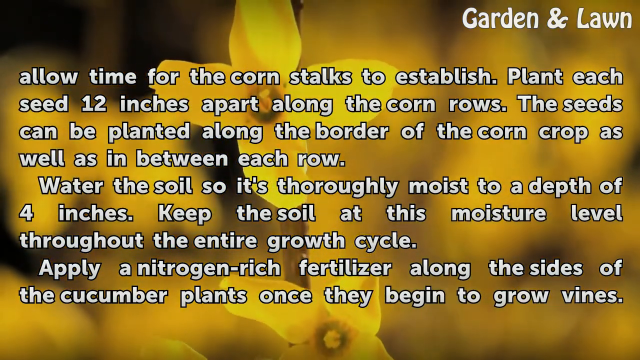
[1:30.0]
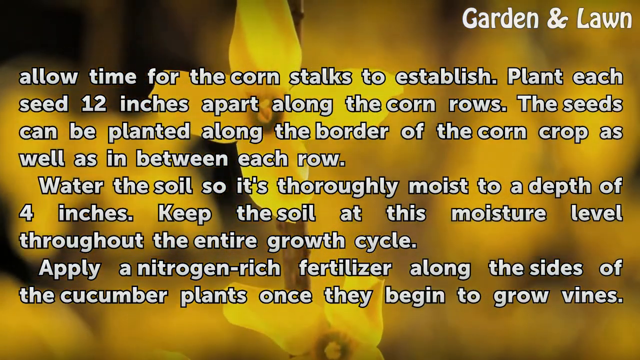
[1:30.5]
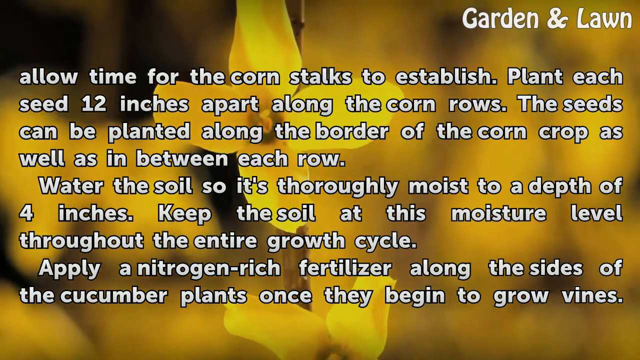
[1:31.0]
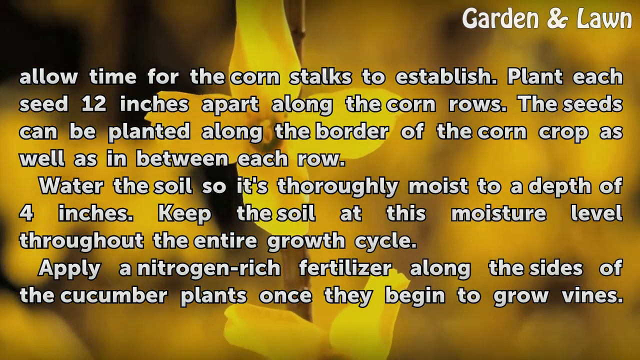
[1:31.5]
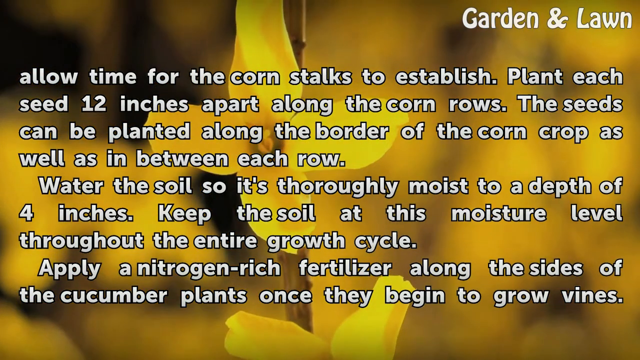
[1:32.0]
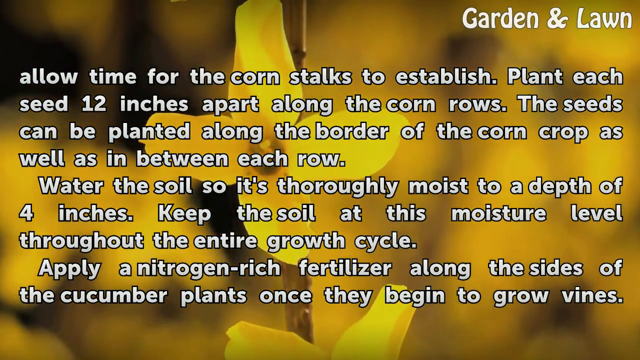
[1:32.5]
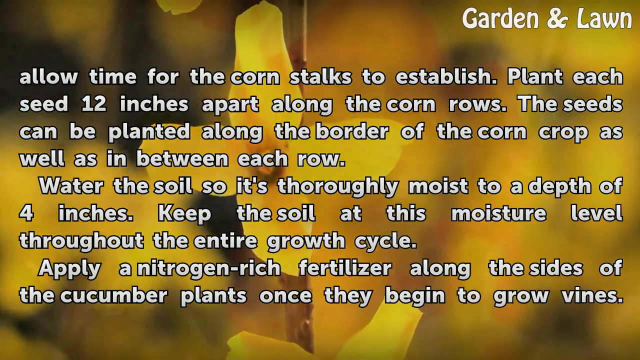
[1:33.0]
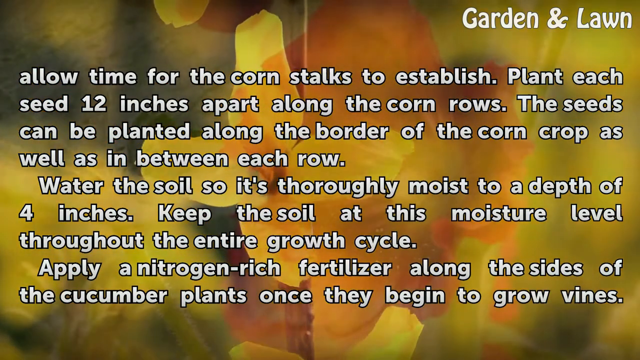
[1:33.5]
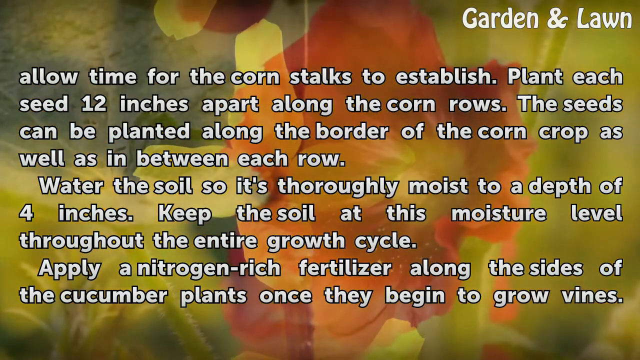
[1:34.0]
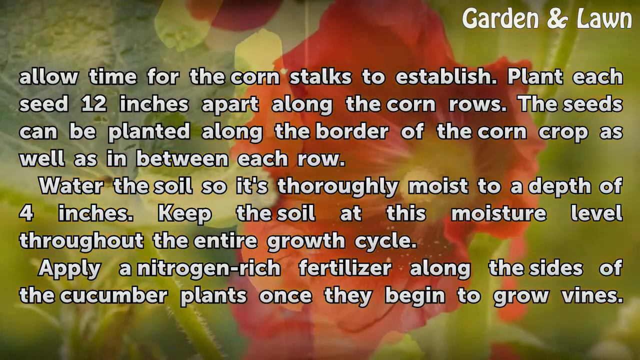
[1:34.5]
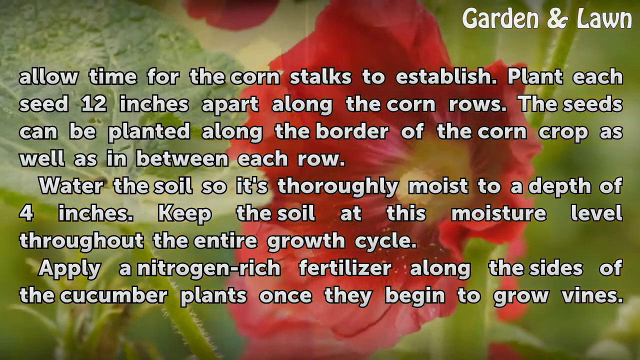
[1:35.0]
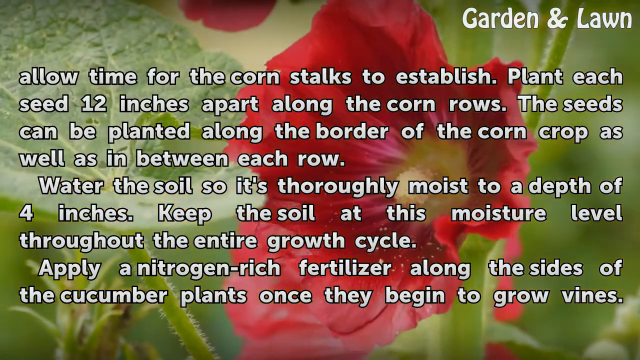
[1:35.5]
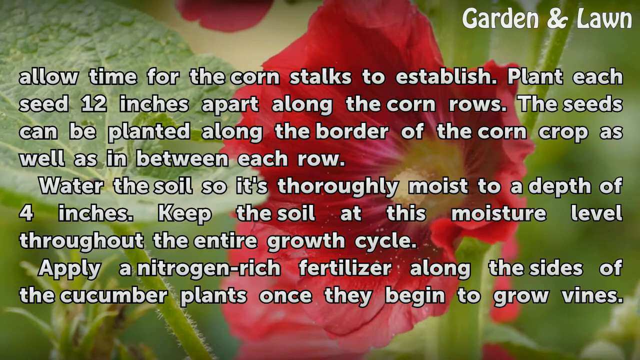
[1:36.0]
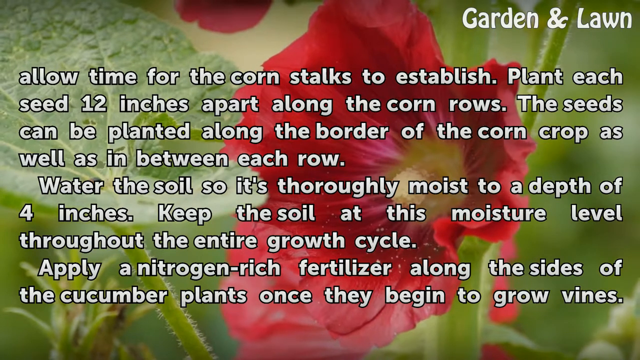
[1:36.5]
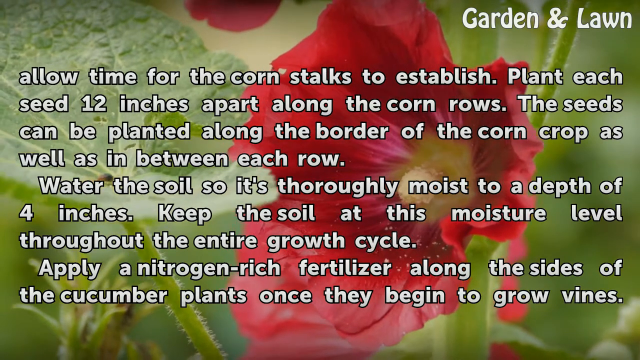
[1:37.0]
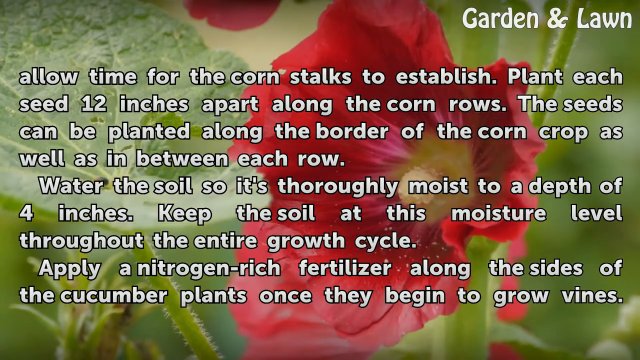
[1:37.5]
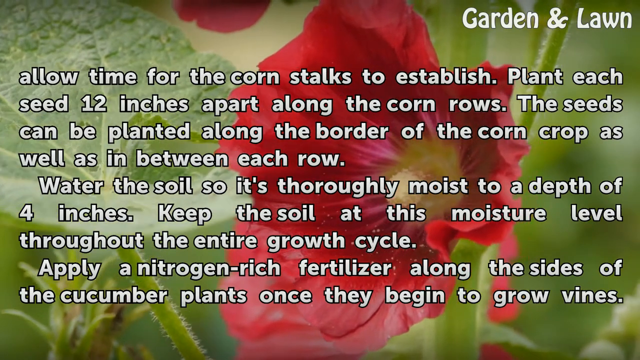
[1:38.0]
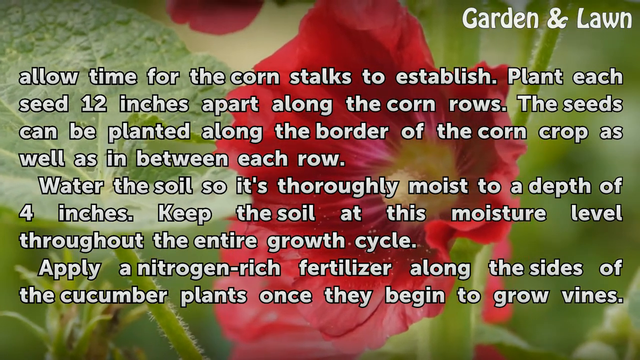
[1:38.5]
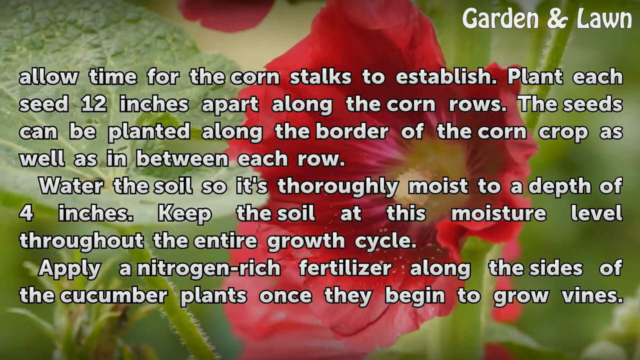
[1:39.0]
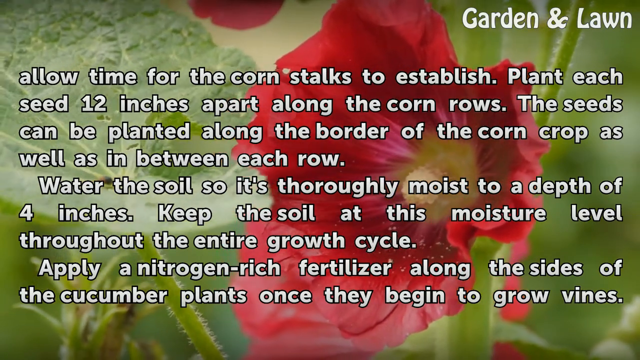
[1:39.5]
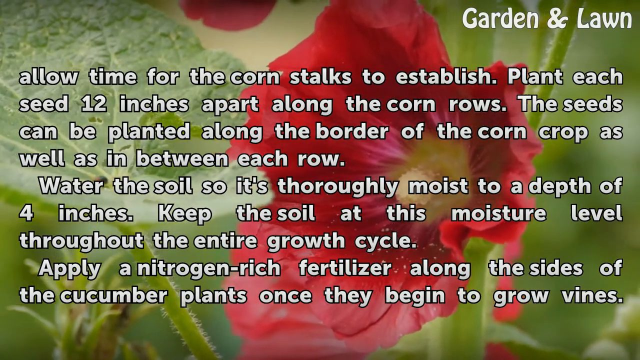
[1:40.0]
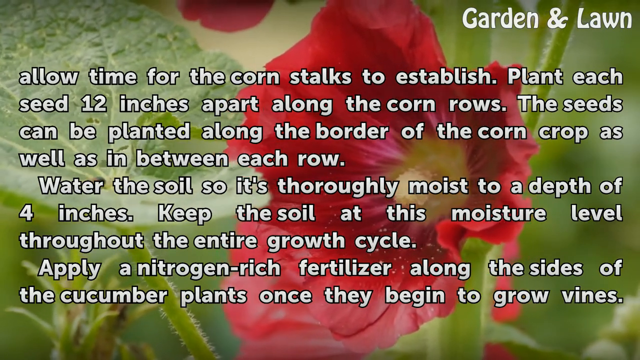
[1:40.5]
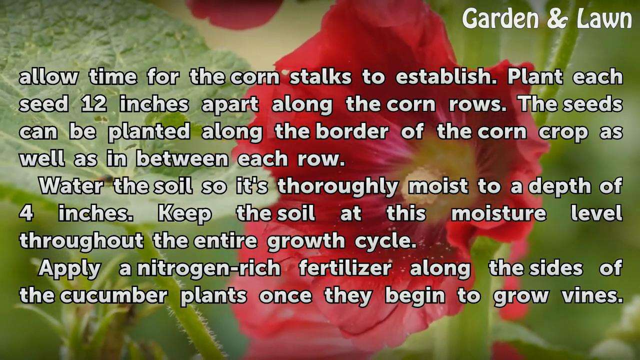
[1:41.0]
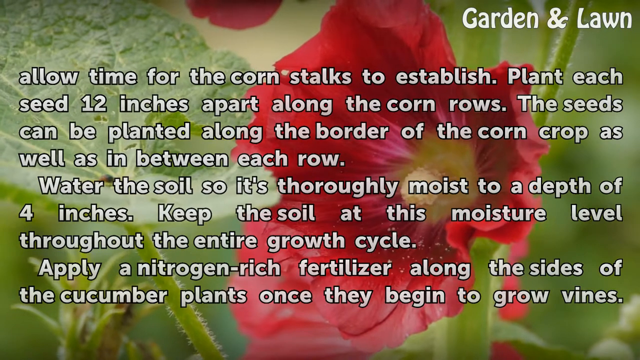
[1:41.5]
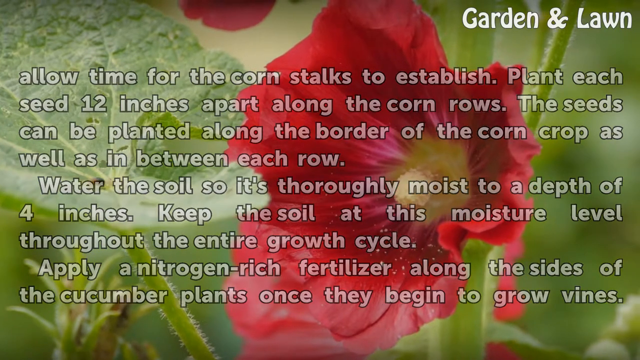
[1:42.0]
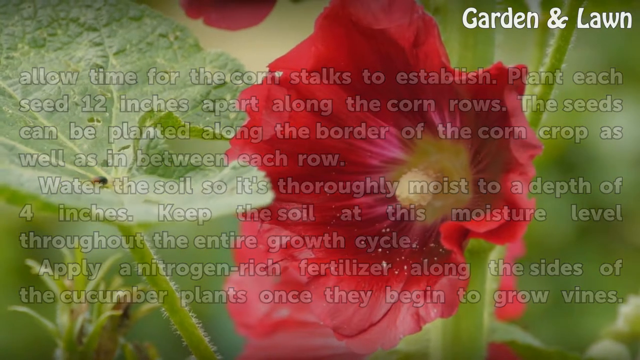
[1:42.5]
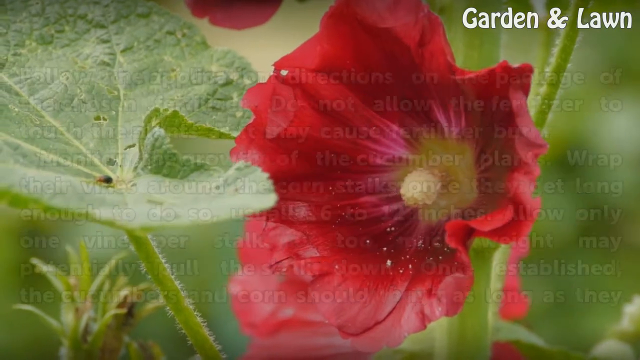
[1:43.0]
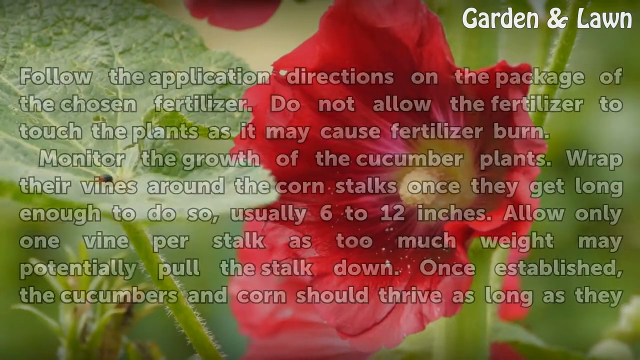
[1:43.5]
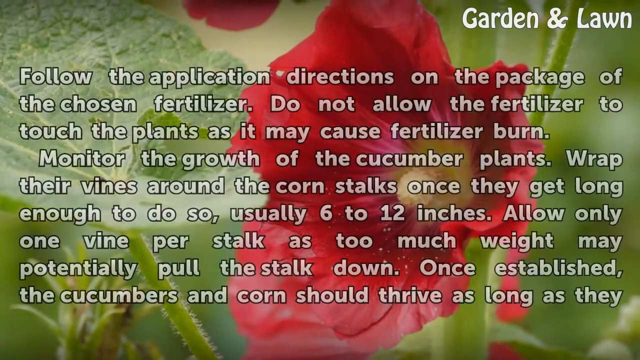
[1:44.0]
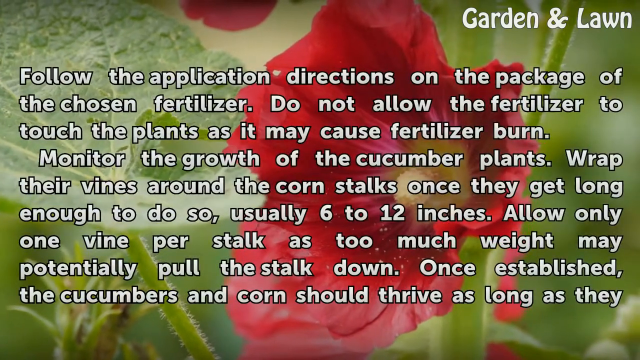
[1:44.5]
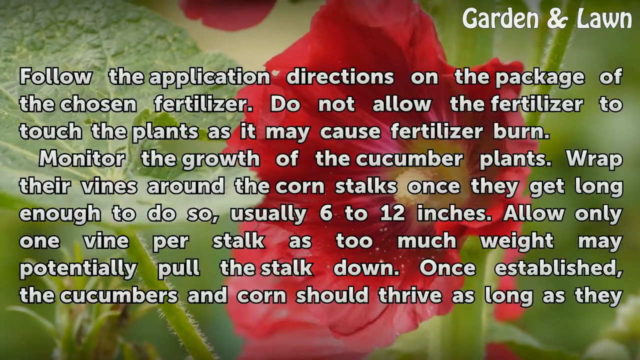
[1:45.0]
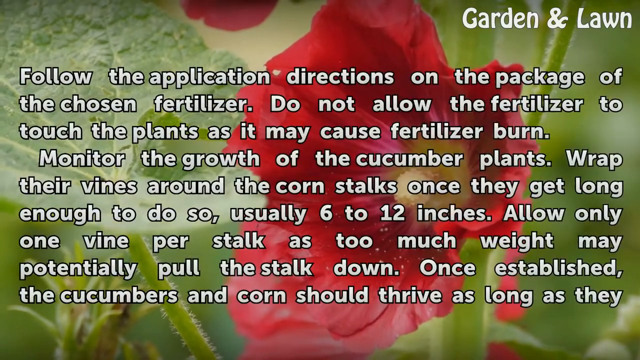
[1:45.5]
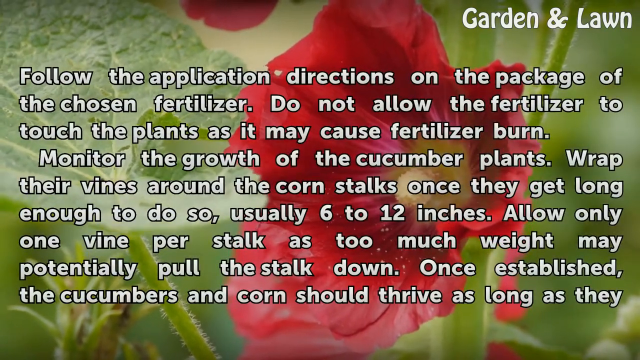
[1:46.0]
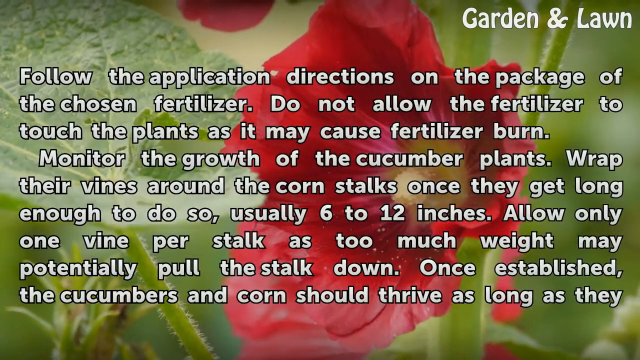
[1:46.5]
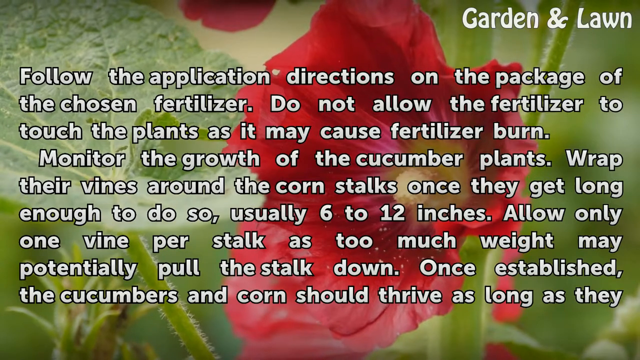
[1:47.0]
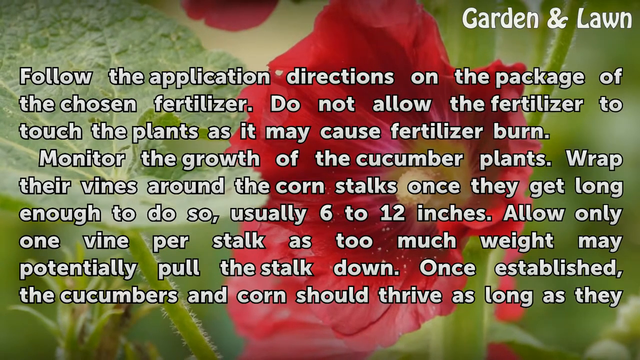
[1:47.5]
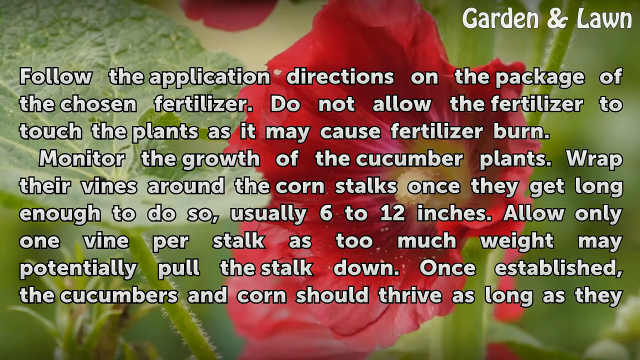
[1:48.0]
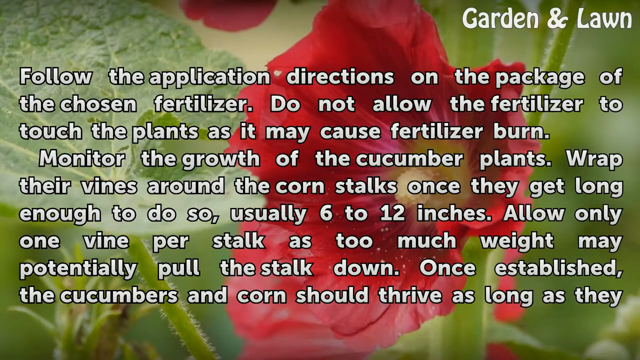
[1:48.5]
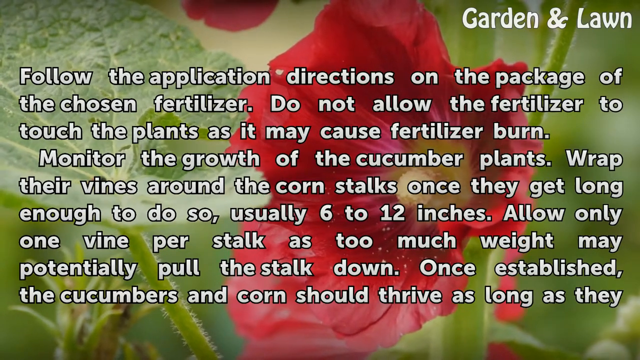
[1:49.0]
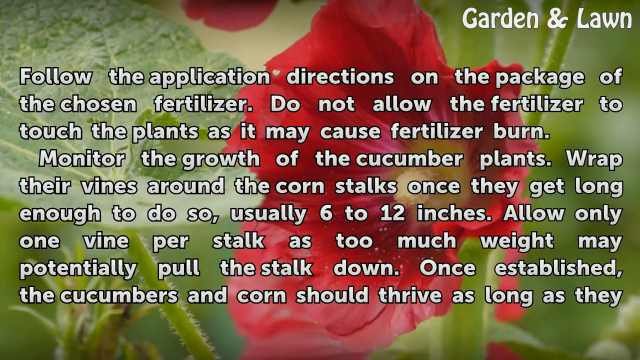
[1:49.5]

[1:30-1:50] A slow panning shot shows yellow-spotted loosestrife, with the text "garden and lawn" in the top right-hand corner throughout. In the center of the screen, a wall of white text with a black outline reads "Allow time for the corn stalks to establish. Plant each seed 12 inches apart along the corn rows. The seeds can be planted along the border of the corn crop as well as in between each row. Water the soil so it's thoroughly moist to a depth of 4 inches. Keep the soil at this moisture level throughout the entire growth cycle. Apply a nitrogen-rich fertilizer along the sides of the cucumber plants once they begin to grow vines." After a brief delay, the screen fades to footage of a hollyhock plant shaking in the wind. The text then fades out and is replaced with the text "Follow the application directions on the package of the chosen fertilizer. Do not allow the fertilizer to touch the plants as it may cause fertilizer burn. Monitor the growth of the cucumber plants. Wrap their vines around the corn stalks once they get long enough to do so, usually 6 to 12 inches. Allow only one vine per stalk as too much weight may potentially pull the stalk down. Once established, the cucumbers and corn should thrive as long as they"; the rest is cut off.